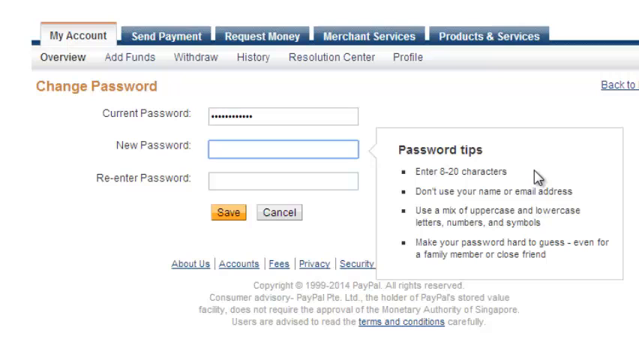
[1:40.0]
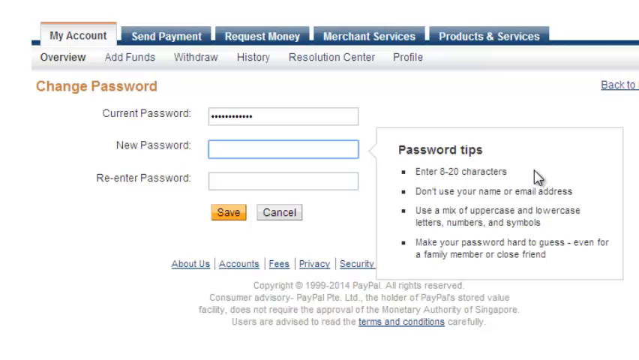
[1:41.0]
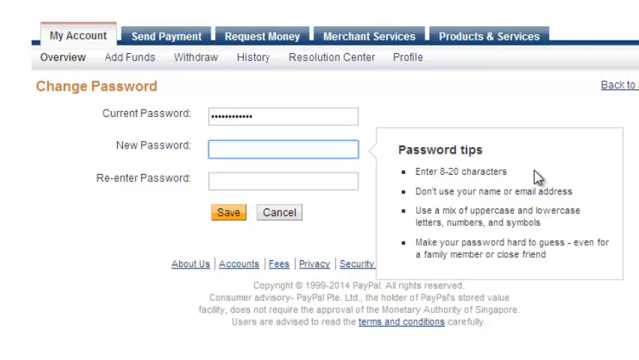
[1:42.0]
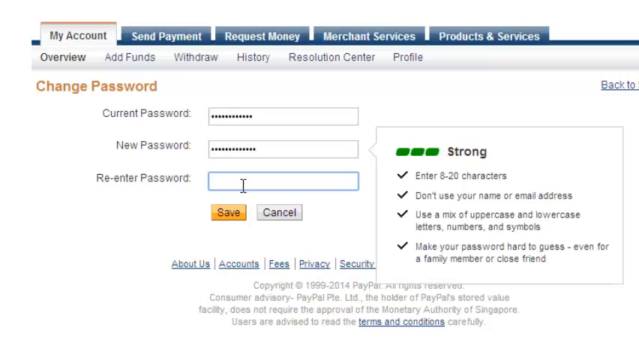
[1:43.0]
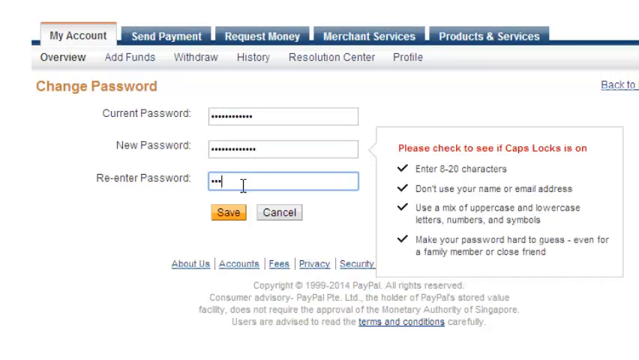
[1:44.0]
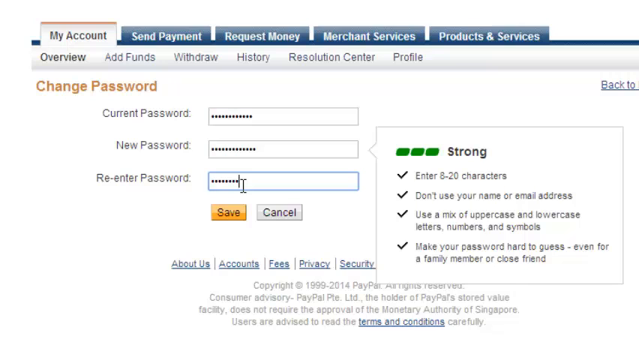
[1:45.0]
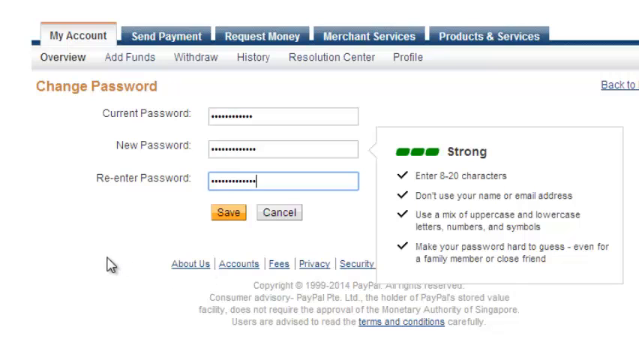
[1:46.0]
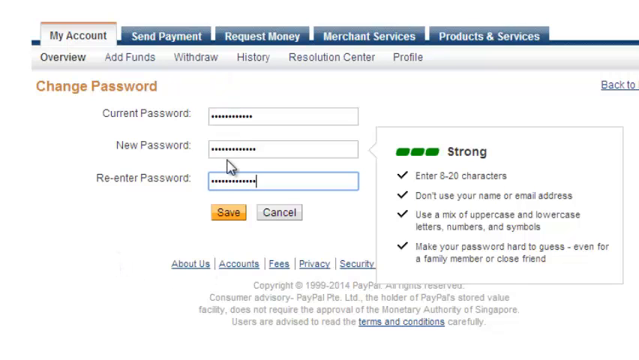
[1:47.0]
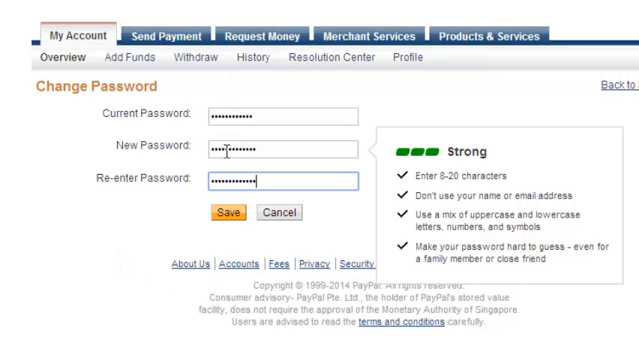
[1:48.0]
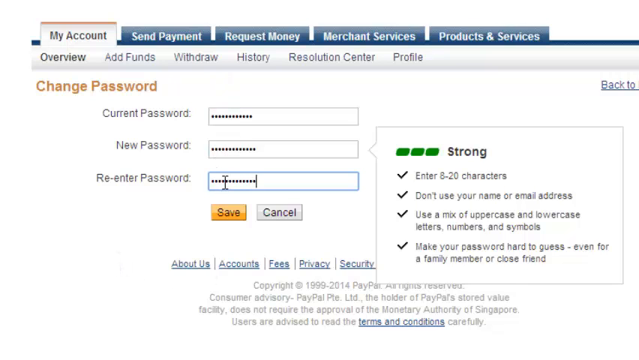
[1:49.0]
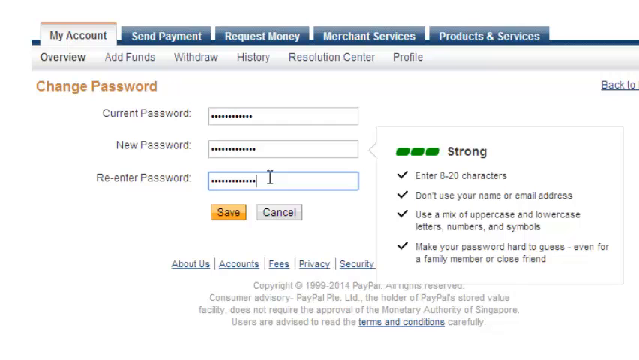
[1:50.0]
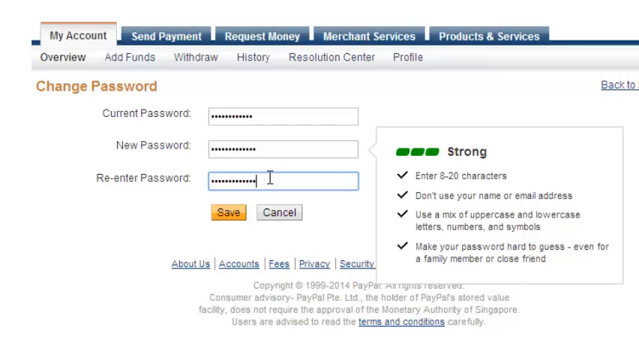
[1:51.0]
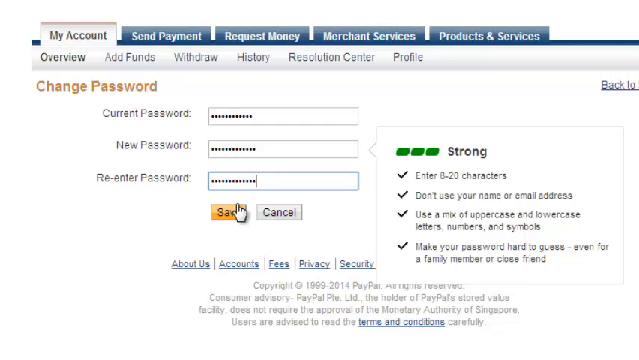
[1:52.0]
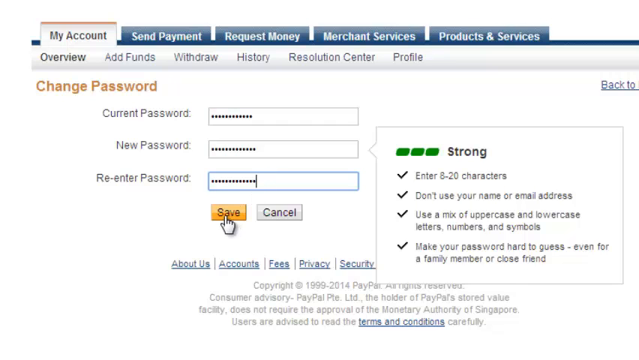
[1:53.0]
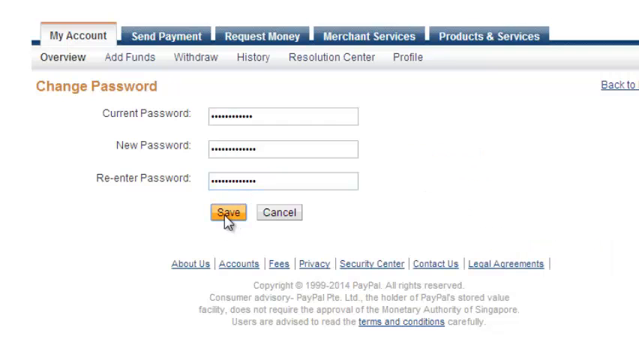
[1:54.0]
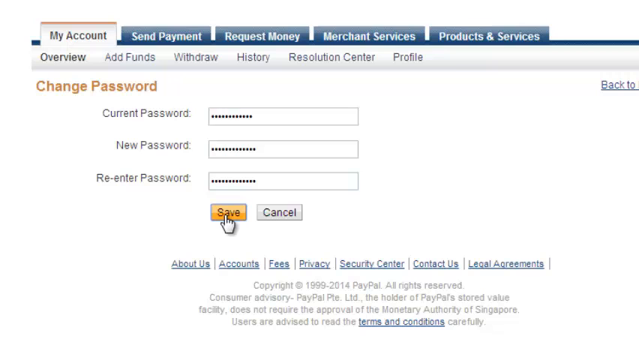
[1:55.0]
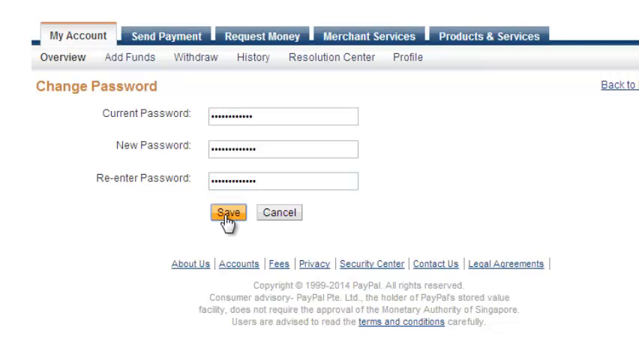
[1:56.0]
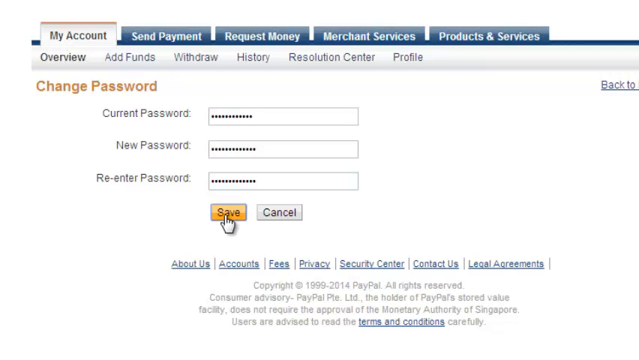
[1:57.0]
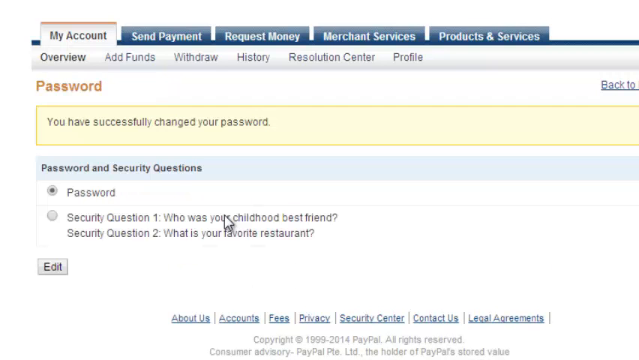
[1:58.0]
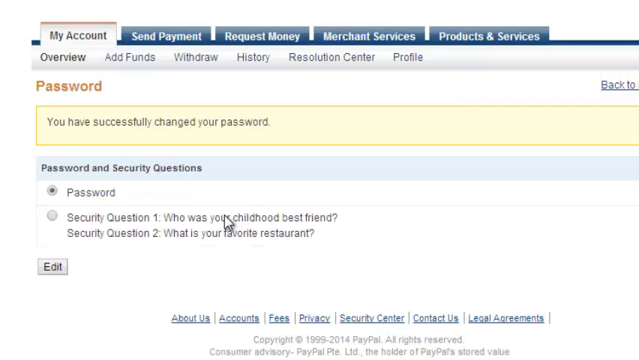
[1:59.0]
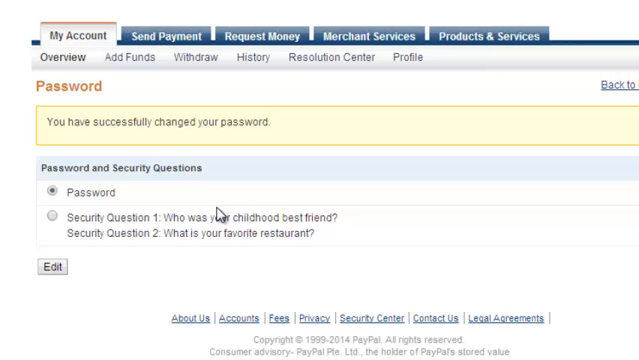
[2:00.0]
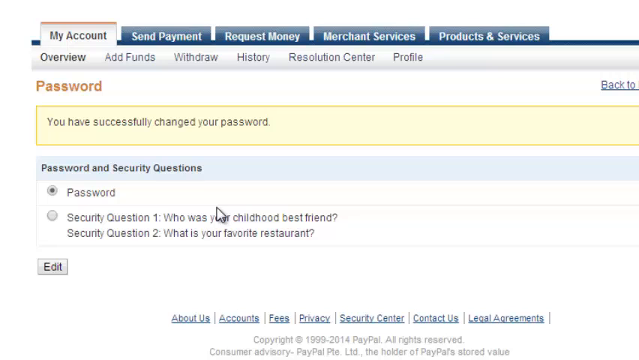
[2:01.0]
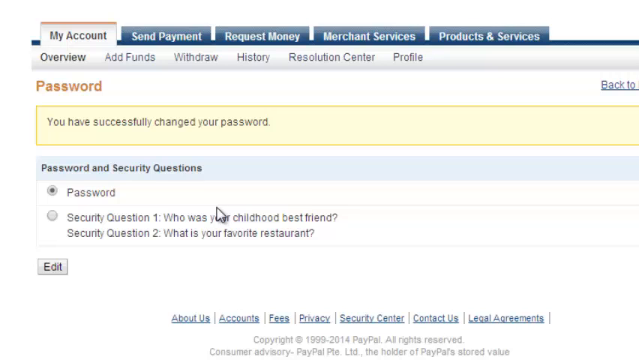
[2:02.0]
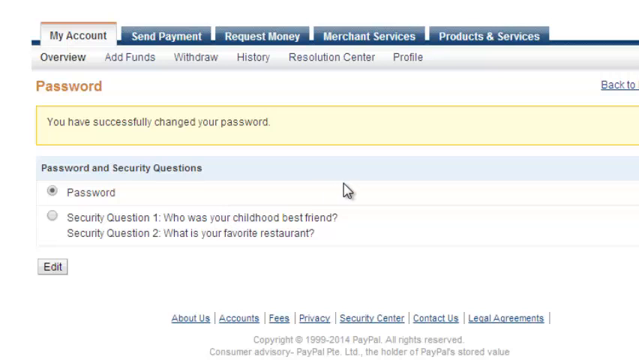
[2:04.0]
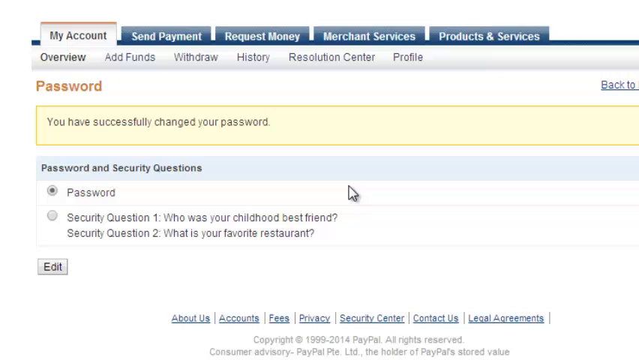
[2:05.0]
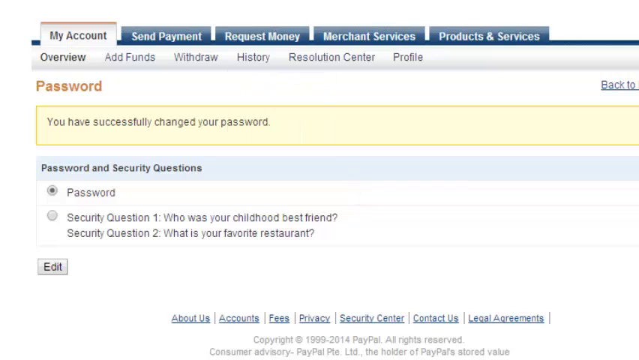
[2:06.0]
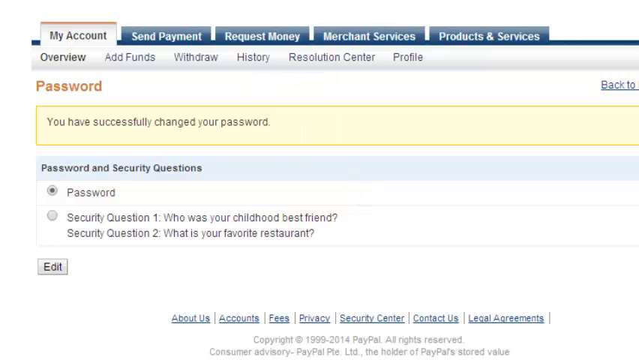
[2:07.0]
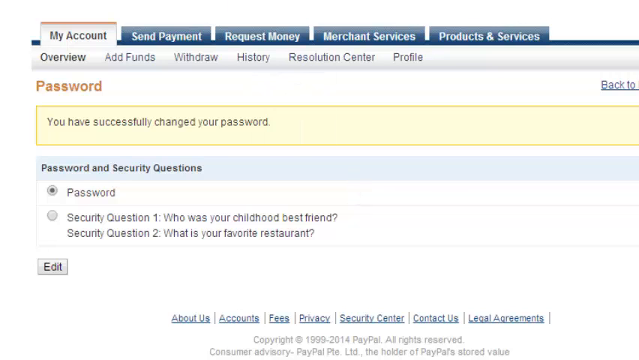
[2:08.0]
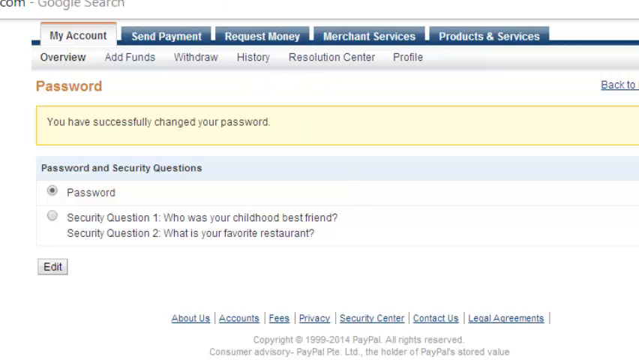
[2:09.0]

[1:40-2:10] A web page has a menu on top where "my account" is selected in a silverish color while the other tabs are blue. Underneath is brown text saying "change password", and below that are three input boxes with blue text labels on the left: "current password", "new password" and "re-enter password". Below is a yellow "save" button with a gray "cancel" button to its right. To the right of that is a header saying "password tips" with a bullet point list of four bullet points. The person first enters the new password, then goes to the third input box and re-enters the password. They hover the cursor over the password, then over the save button, and click save.